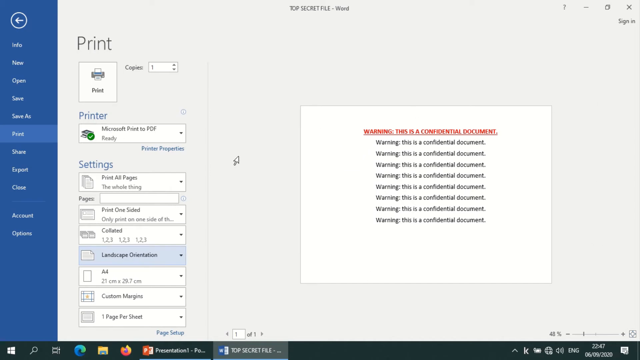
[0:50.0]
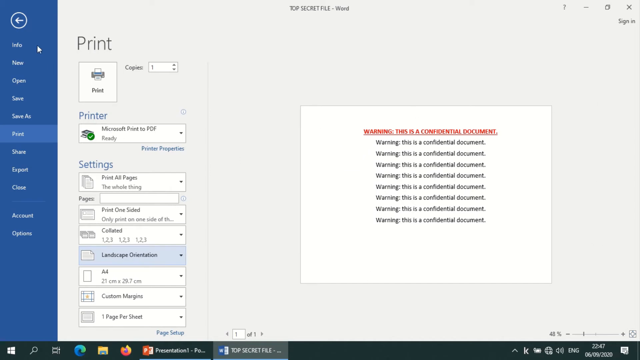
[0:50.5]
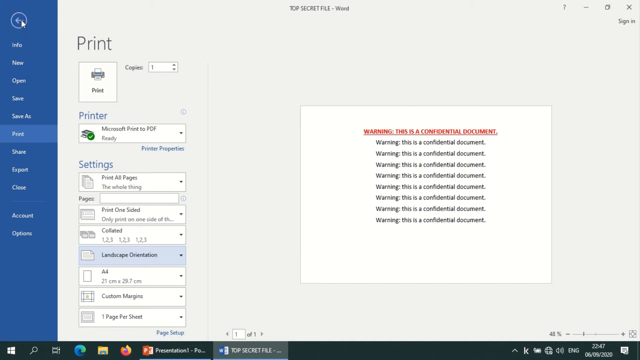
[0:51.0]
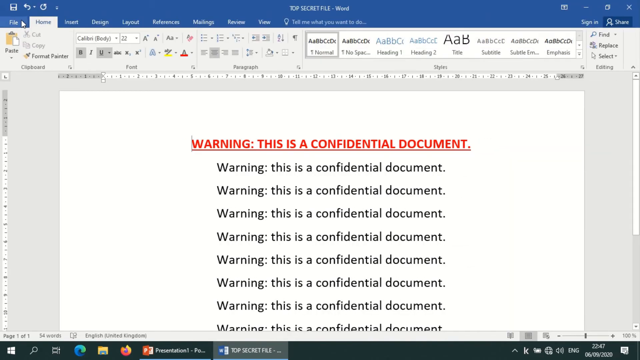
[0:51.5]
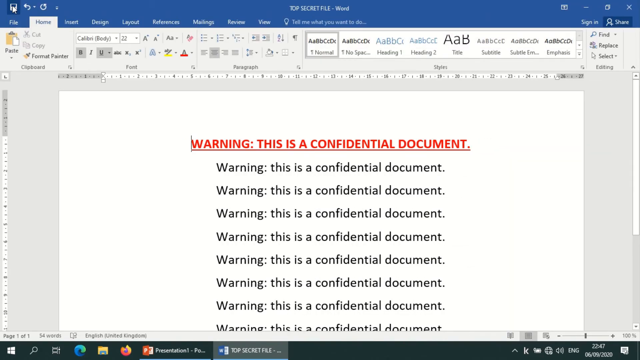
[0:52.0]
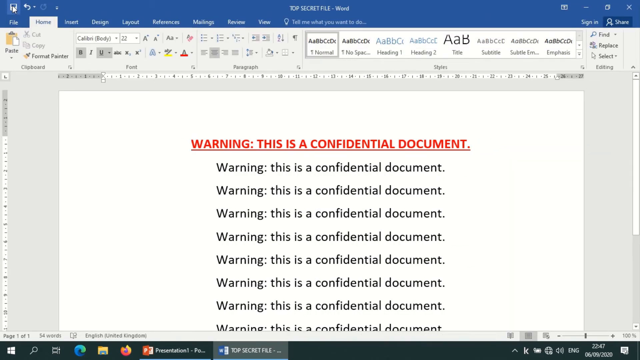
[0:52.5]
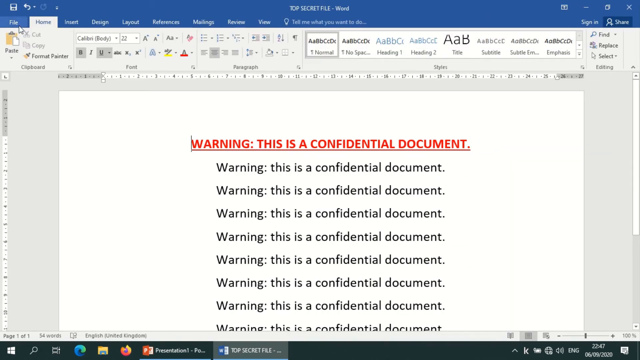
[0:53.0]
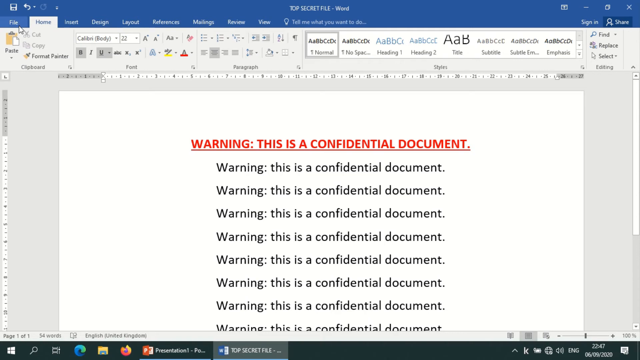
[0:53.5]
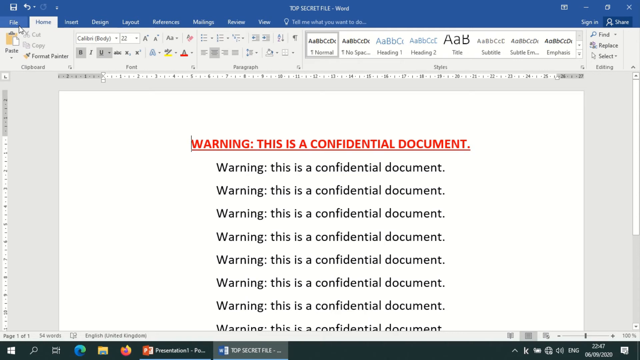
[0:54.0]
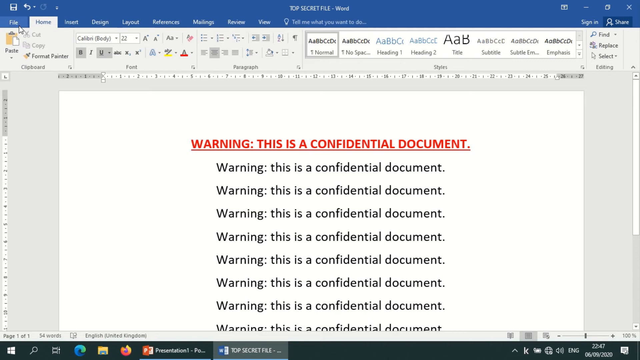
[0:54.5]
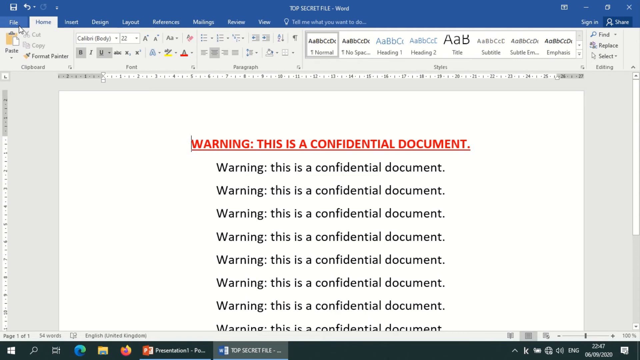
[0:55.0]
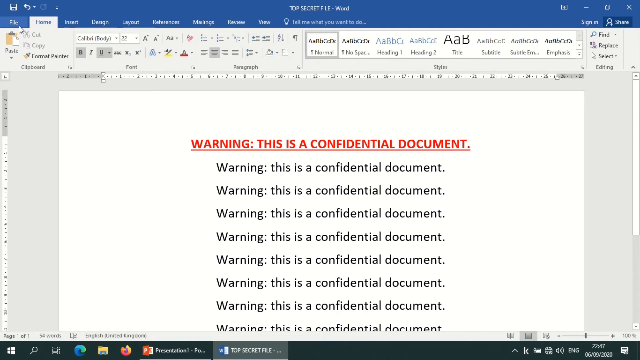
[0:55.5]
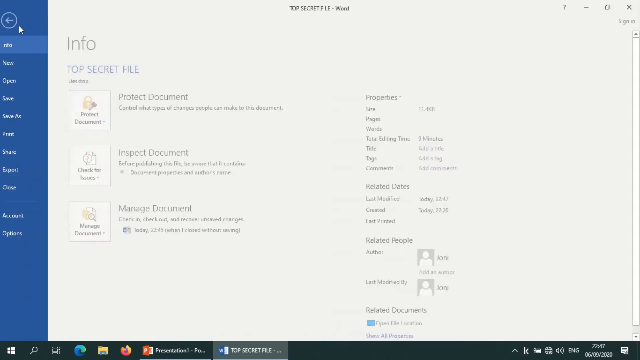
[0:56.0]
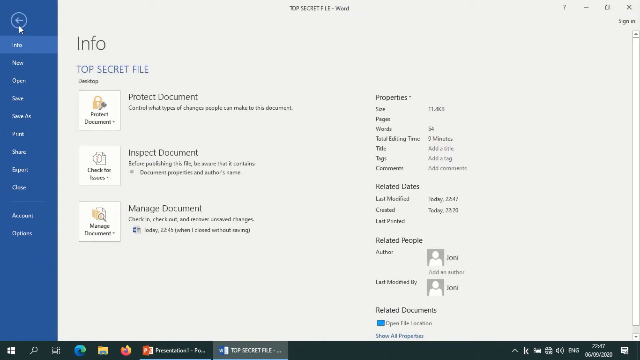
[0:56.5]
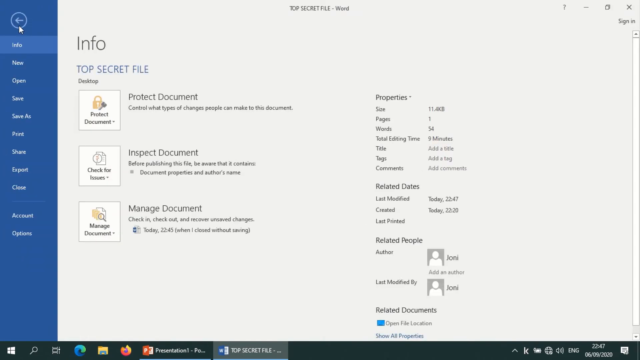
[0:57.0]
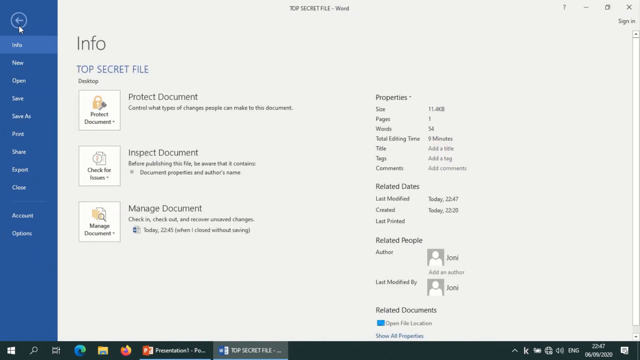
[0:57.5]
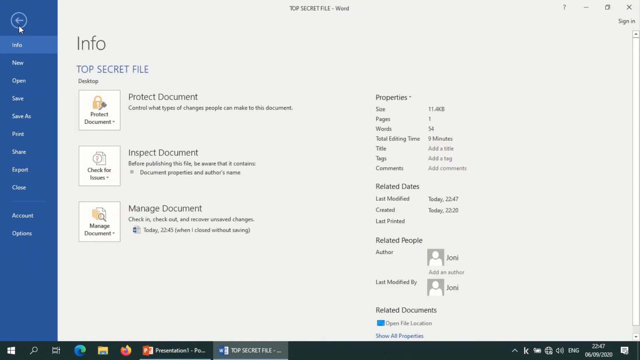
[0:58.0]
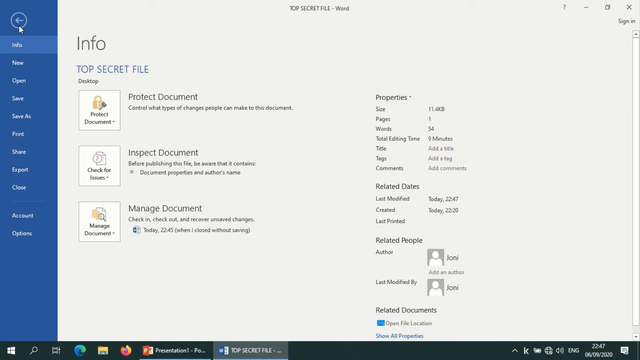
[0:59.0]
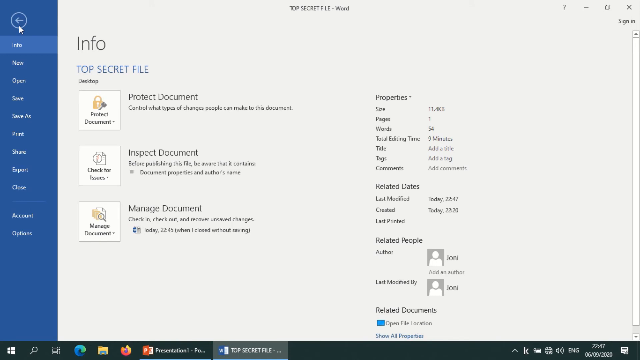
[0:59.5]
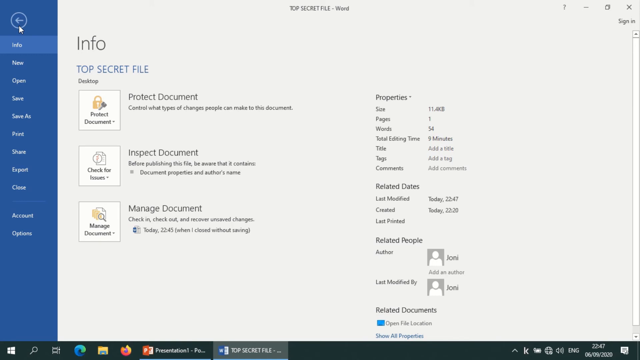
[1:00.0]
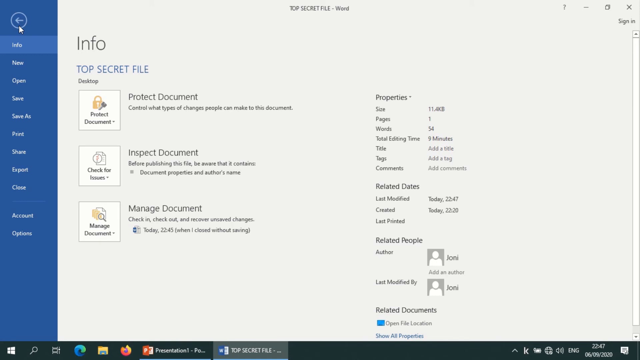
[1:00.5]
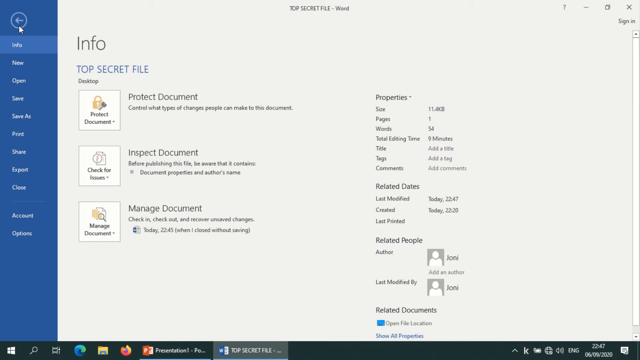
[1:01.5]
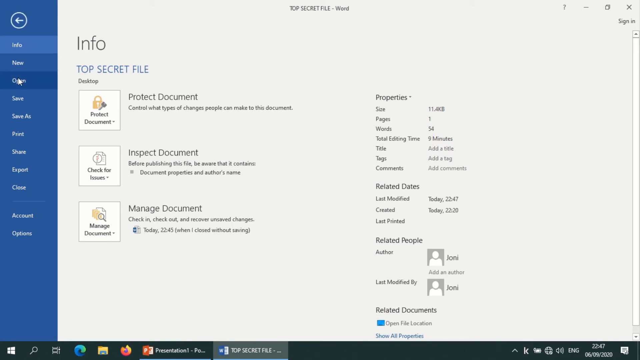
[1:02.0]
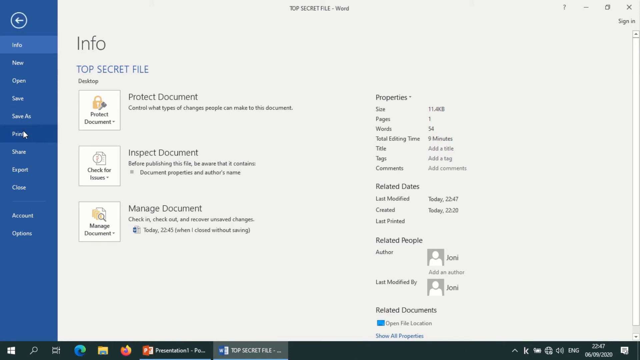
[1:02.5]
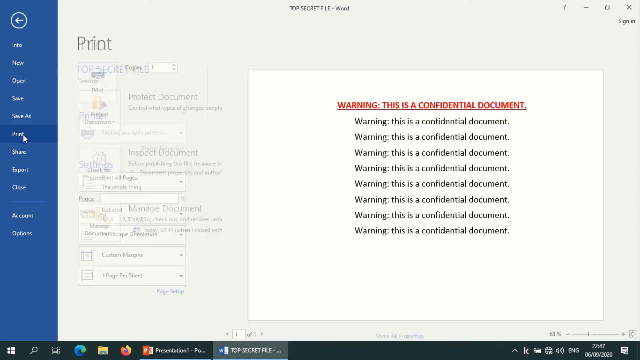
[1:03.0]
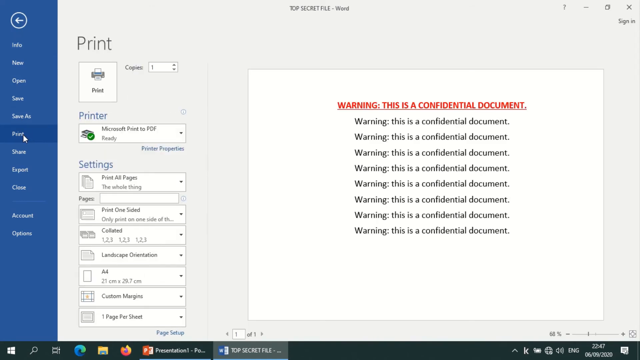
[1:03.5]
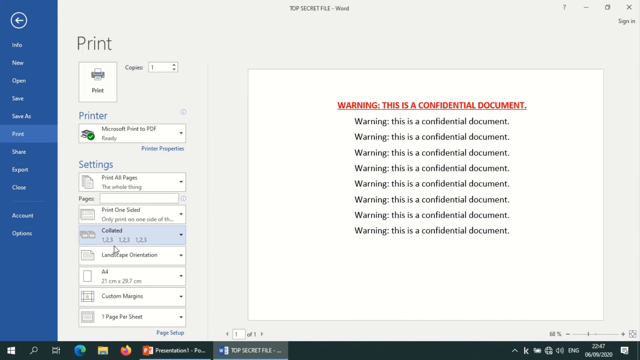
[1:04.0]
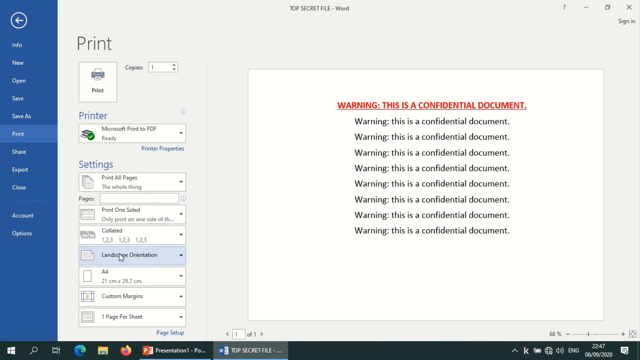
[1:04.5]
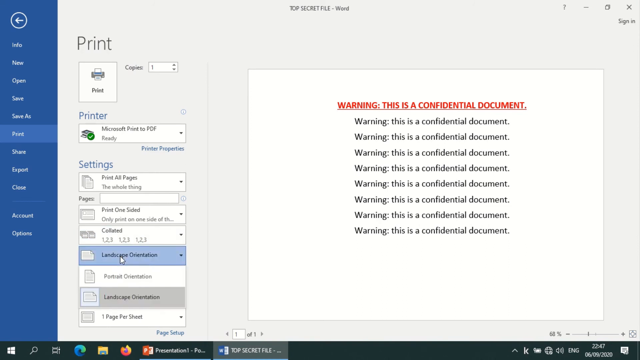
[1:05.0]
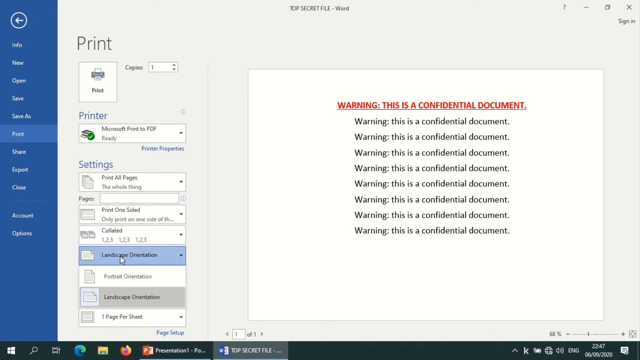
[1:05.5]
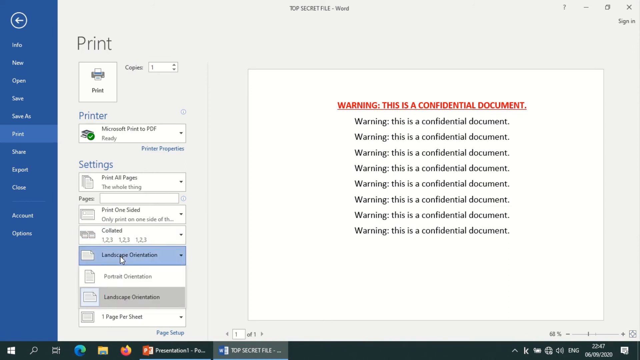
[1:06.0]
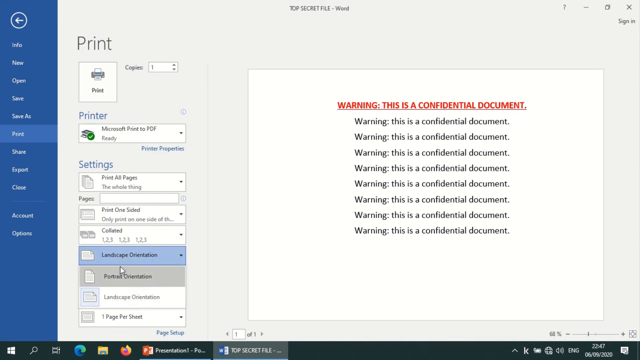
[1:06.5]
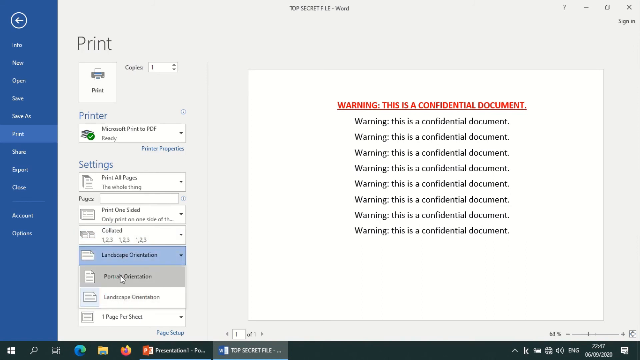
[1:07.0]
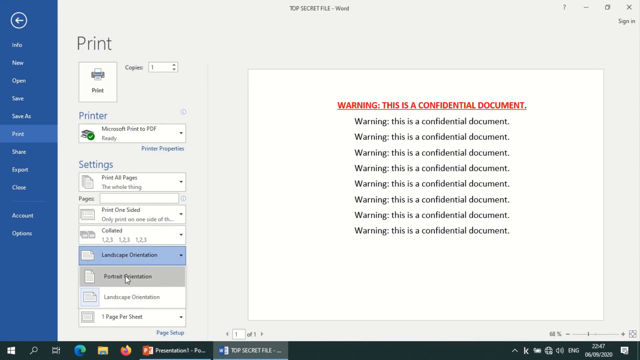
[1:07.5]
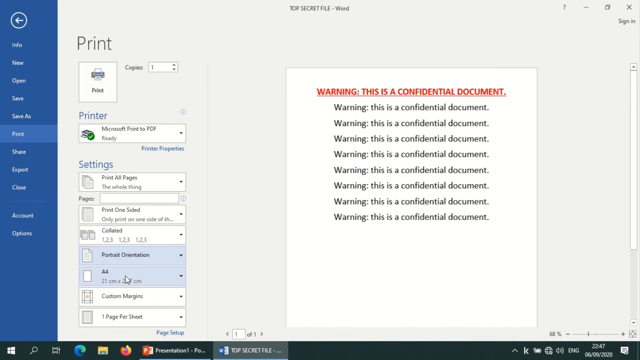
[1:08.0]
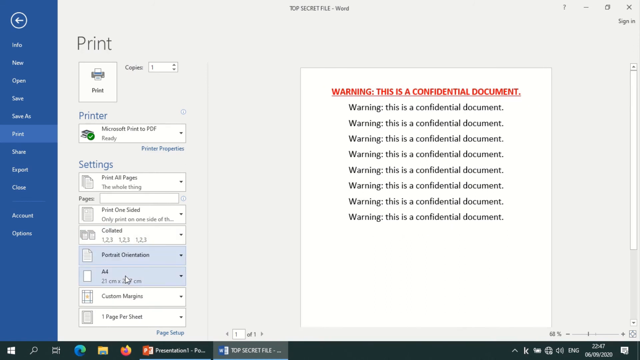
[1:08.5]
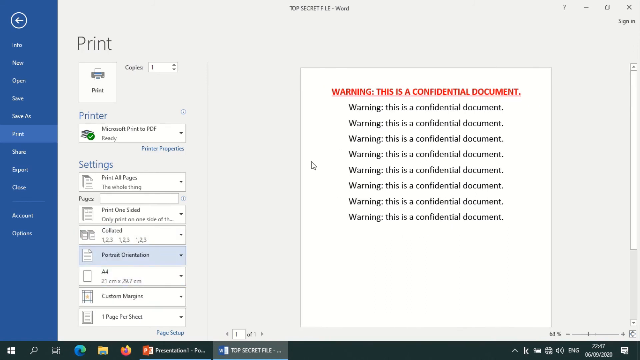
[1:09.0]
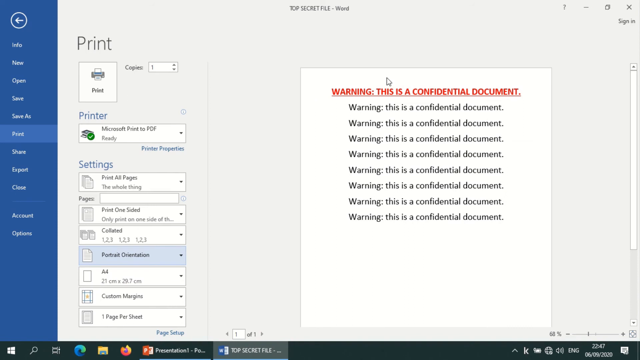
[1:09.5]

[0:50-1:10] The file is in its landscape form. The view apparently returns to the settings, showing the Info page with the top secret file and options to protect, inspect and manage the document, along with the document's properties. The side menu lists new, open, save, save as, print, share, export, close, account and options. The user goes back to the print button and changes the orientation from landscape back to portrait, all within Microsoft Word. The user is possibly making a video to teach how to print from a Word file to PDF.